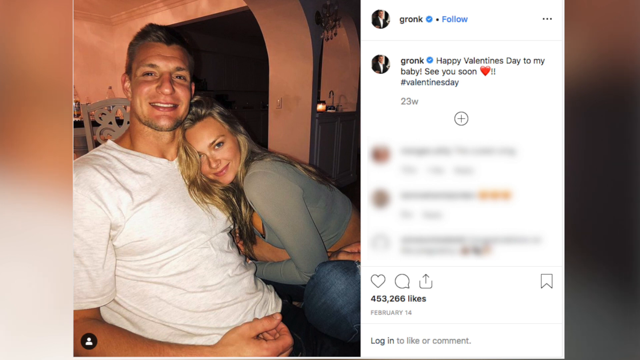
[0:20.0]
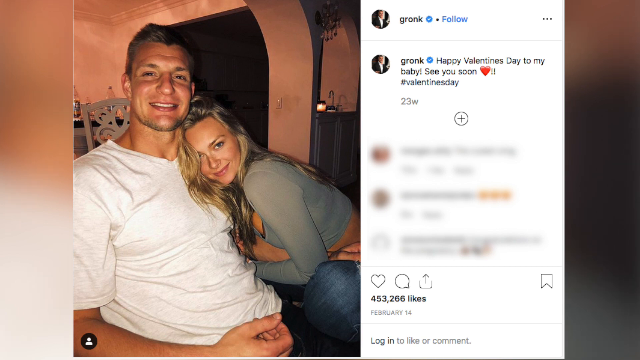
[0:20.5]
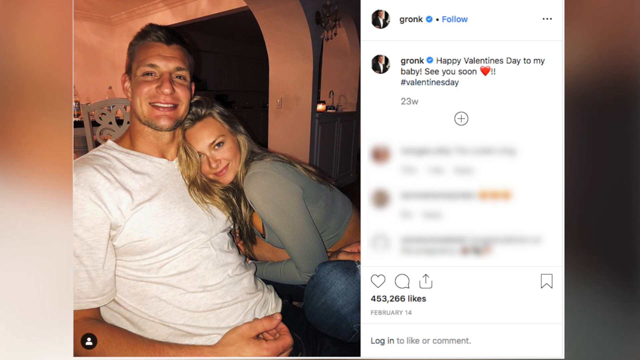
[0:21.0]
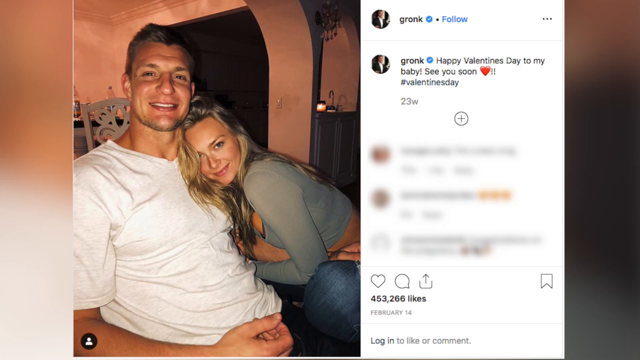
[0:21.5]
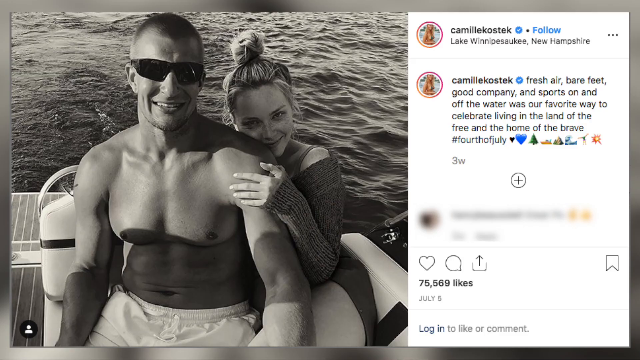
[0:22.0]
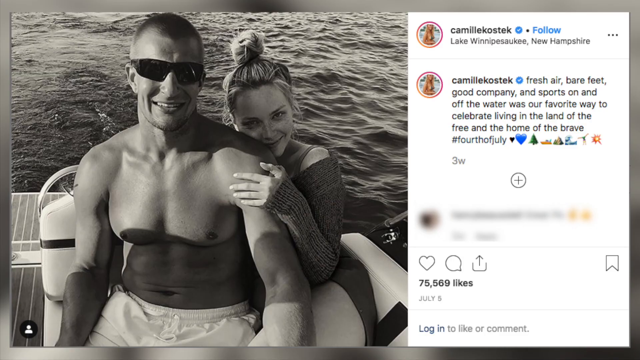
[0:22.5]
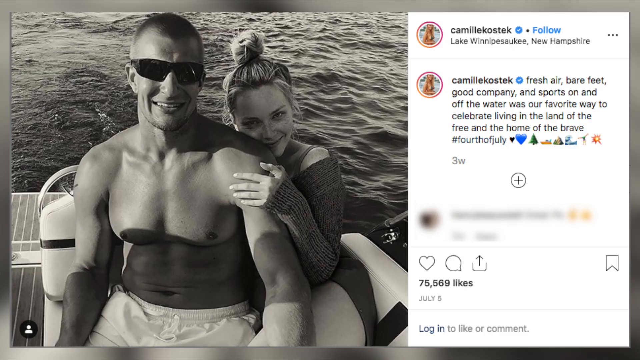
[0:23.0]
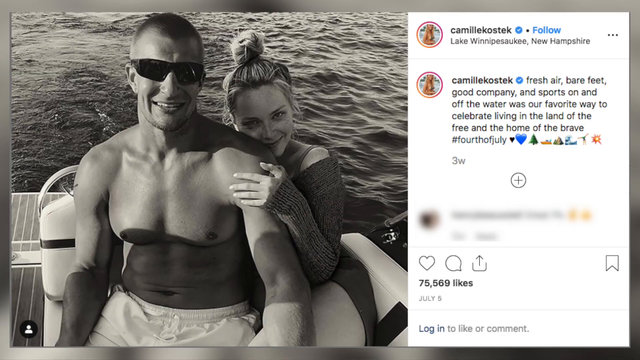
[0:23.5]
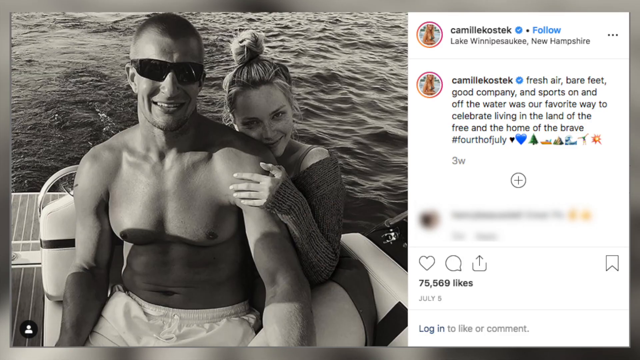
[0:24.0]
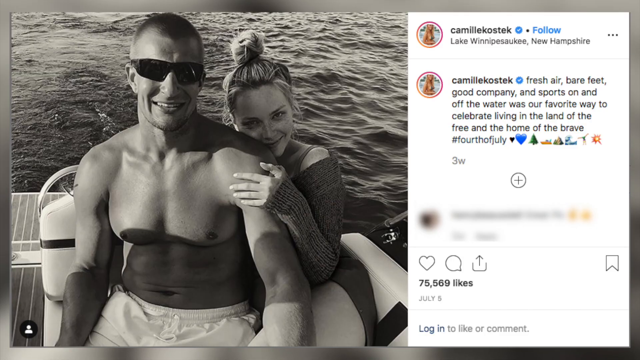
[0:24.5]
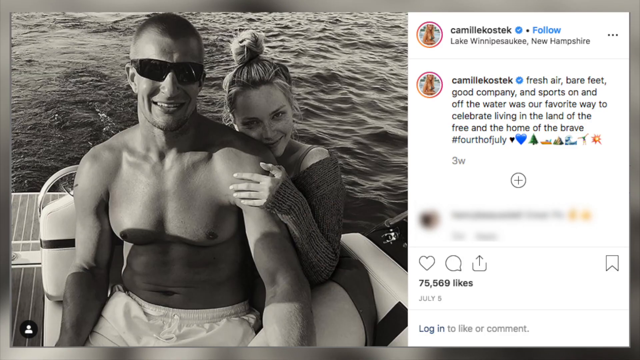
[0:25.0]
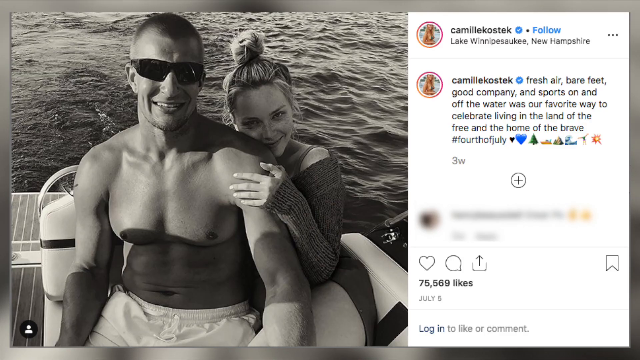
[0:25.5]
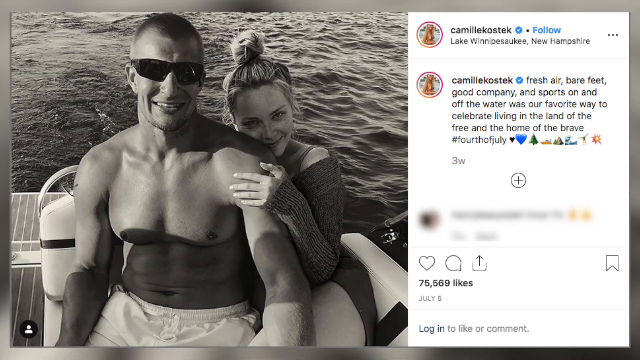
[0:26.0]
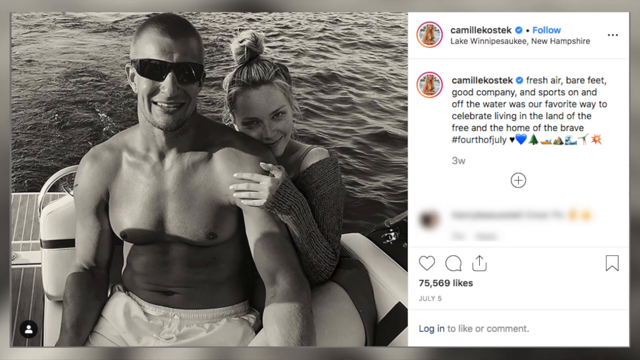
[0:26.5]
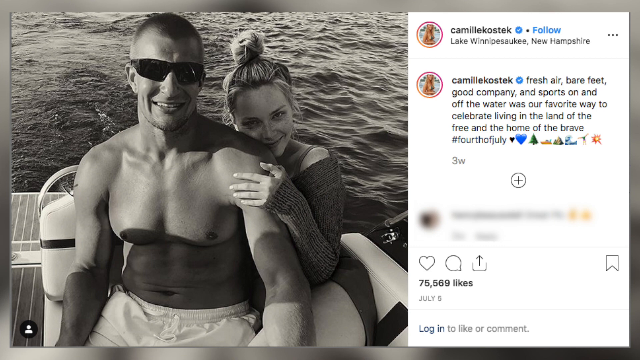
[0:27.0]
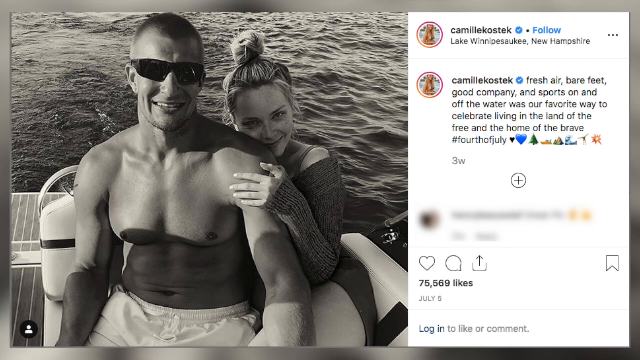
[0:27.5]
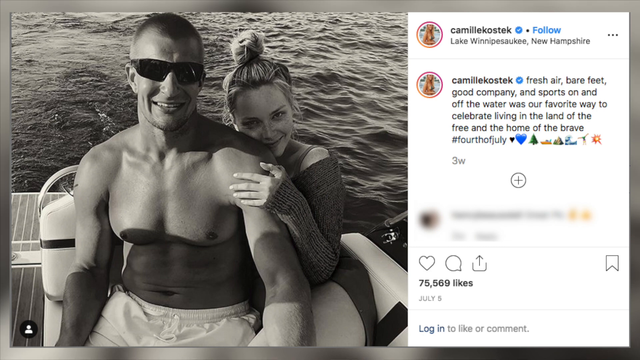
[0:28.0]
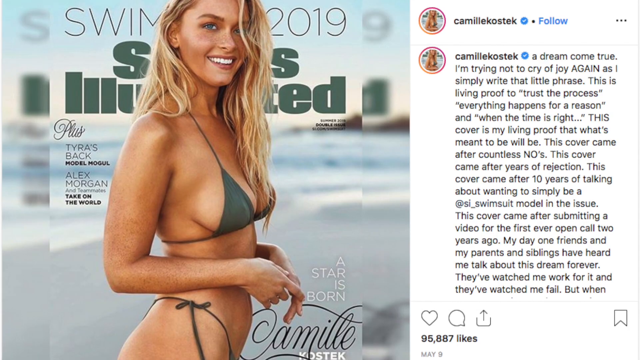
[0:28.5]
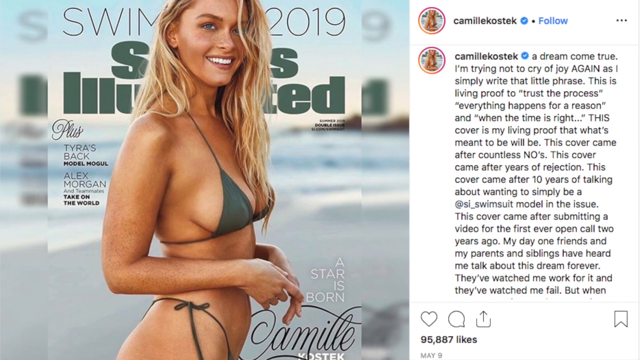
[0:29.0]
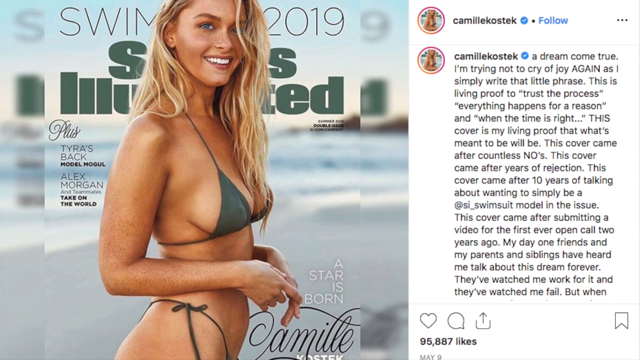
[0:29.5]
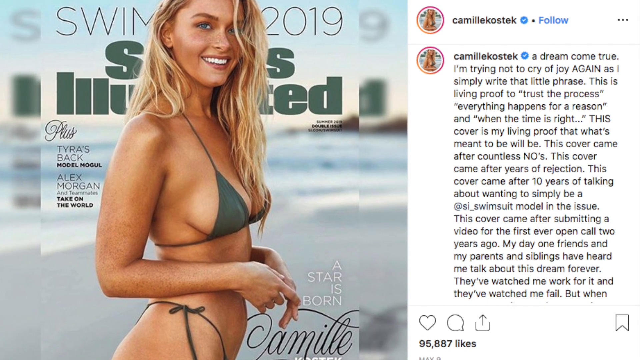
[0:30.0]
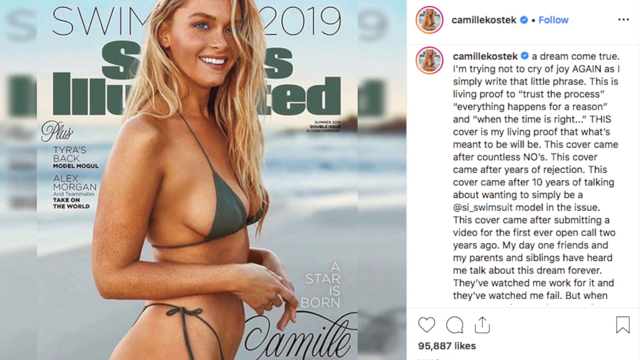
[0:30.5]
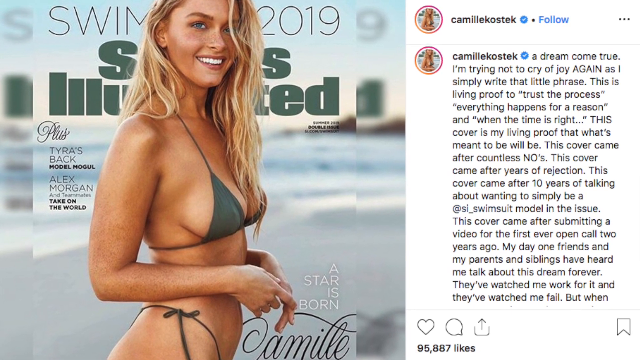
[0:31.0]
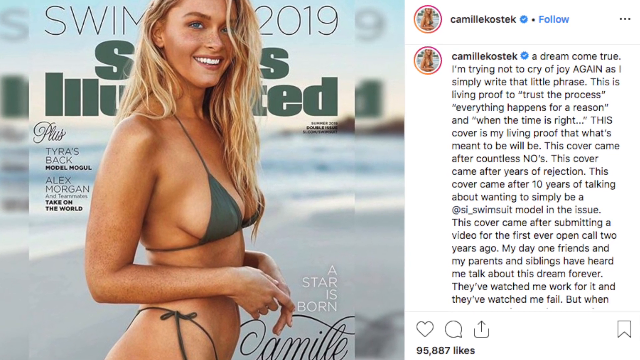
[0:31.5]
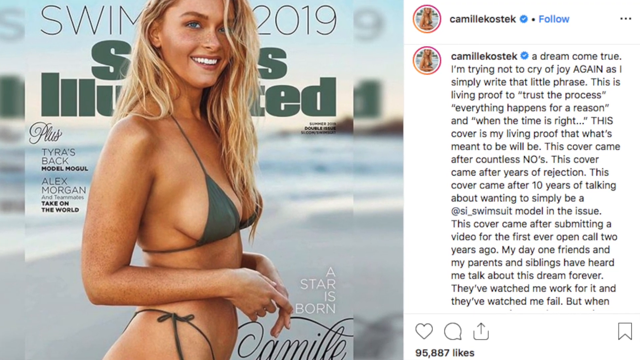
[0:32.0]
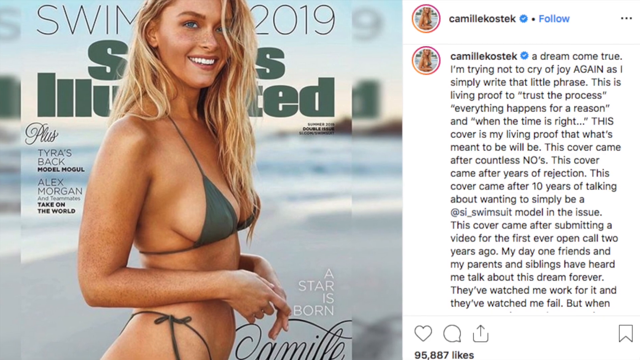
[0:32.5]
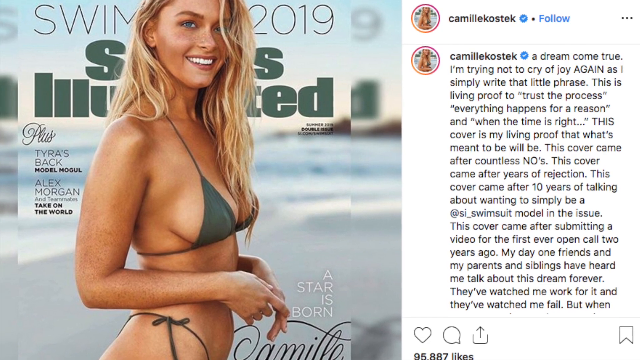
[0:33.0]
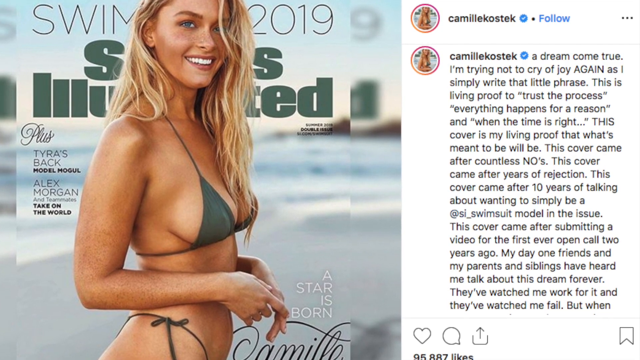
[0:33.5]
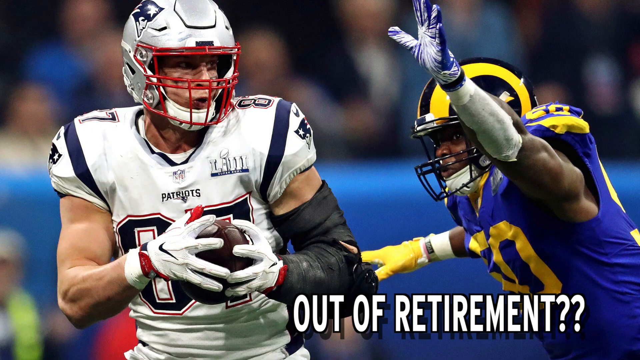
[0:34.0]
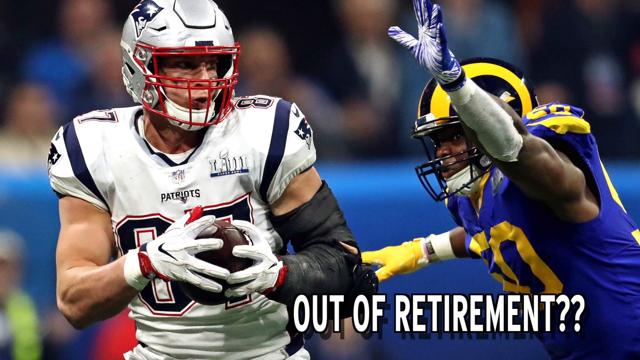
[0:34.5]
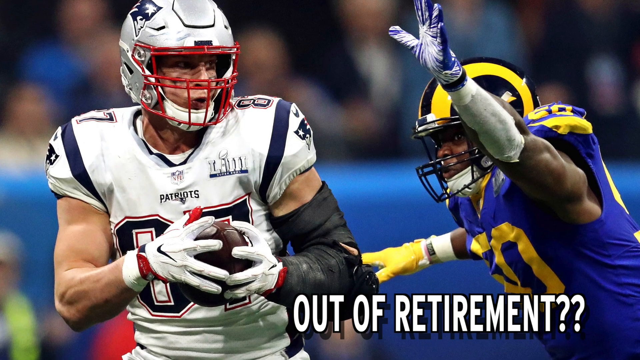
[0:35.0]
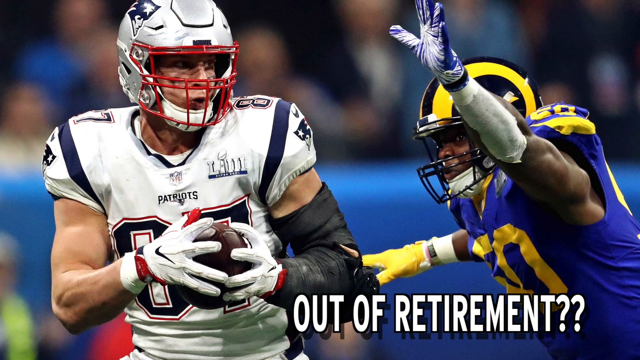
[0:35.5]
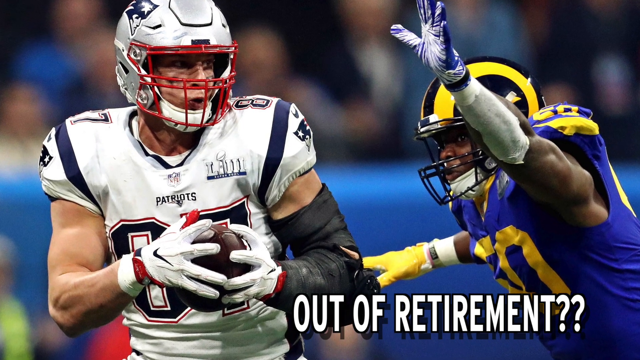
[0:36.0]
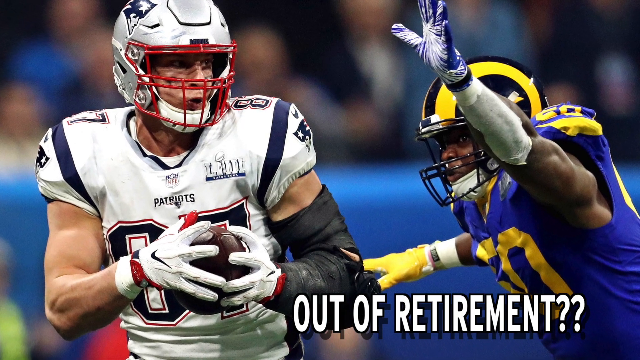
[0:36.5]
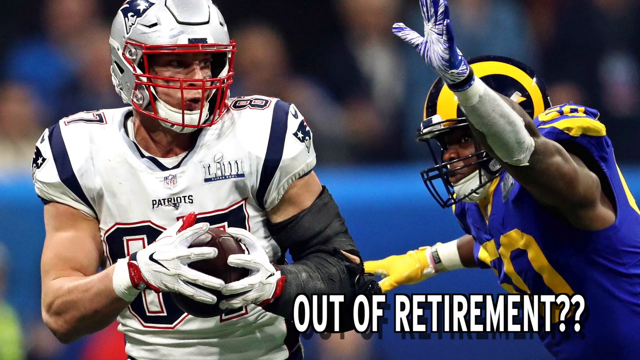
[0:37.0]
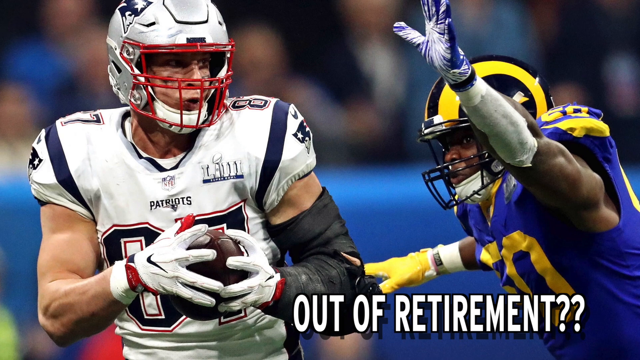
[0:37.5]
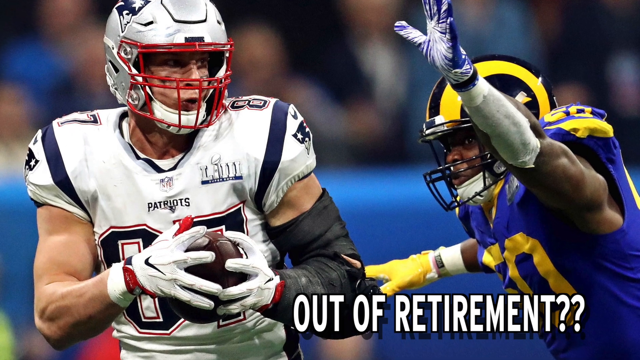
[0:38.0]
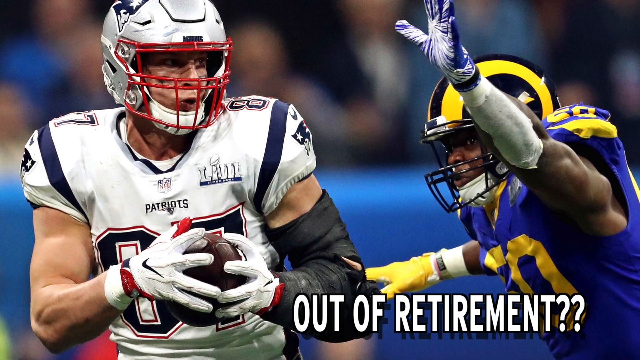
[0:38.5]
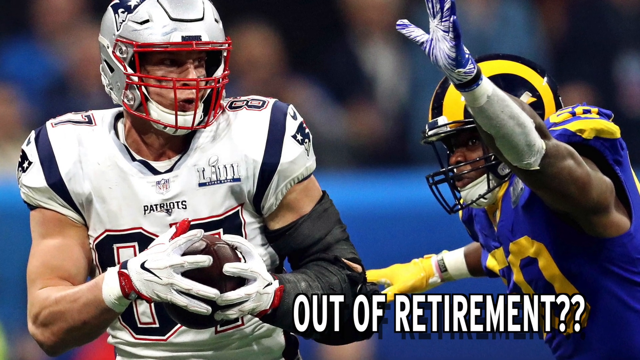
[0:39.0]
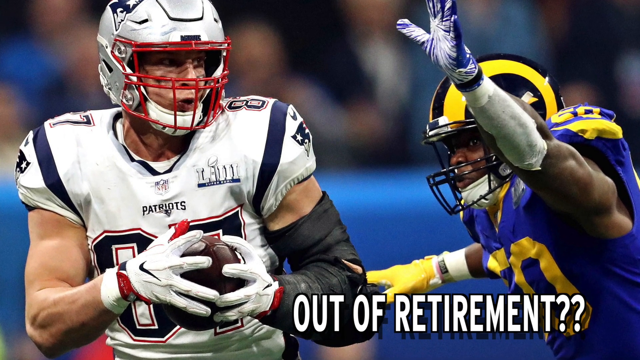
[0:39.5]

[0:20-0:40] An Instagram post shows a man with blonde hair in a white t-shirt smiling and looking at the camera, with a blonde woman in a green shirt laying her head on his chest. The scene changes to a black and white Instagram post from the user Camille Kostick. Its text says "fresh air, bare feet, good company, and sports on and off the water was our favorite way to celebrate living in the land of the free and home of the brave, #fourth of July." On the left side of the post, the black and white photo shows a shirtless man in sunglasses smiling, and a woman laying her head on his shoulder and looking at the camera. The scene stays on them for a few moments with nothing changing. It then changes to an Instagram post from Camille Kostick showing her in a green bikini on the magazine cover for Sports Illustrated Swimsuit Edition.